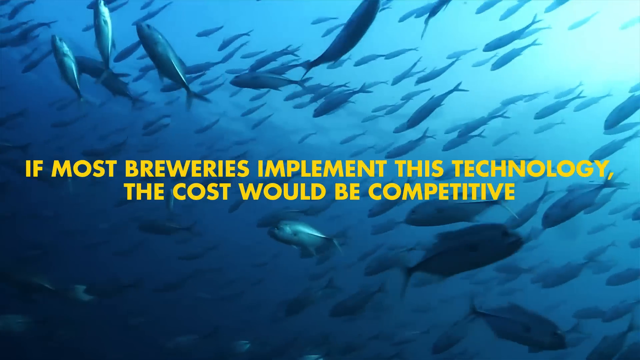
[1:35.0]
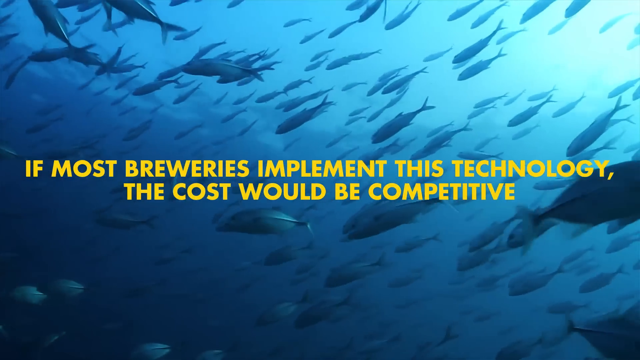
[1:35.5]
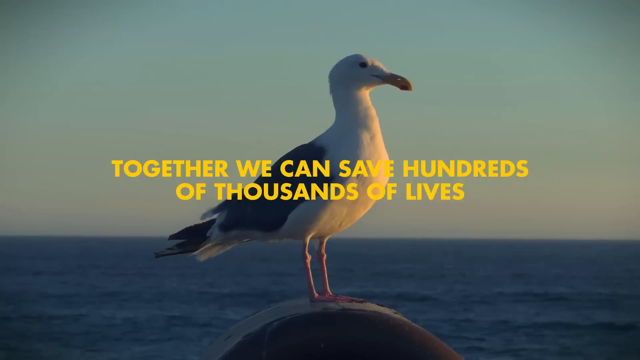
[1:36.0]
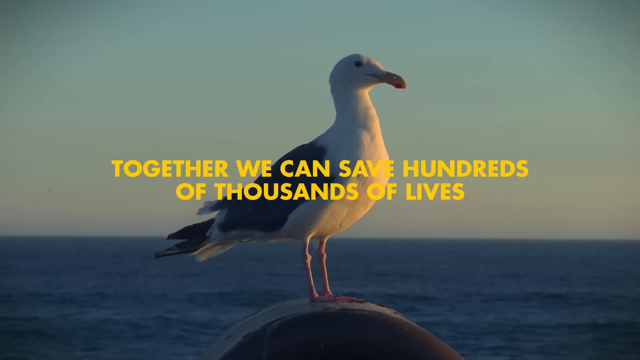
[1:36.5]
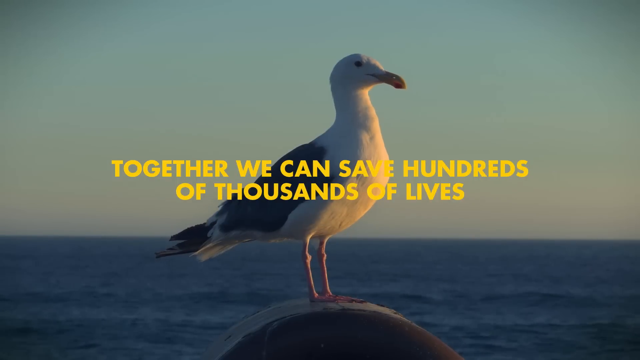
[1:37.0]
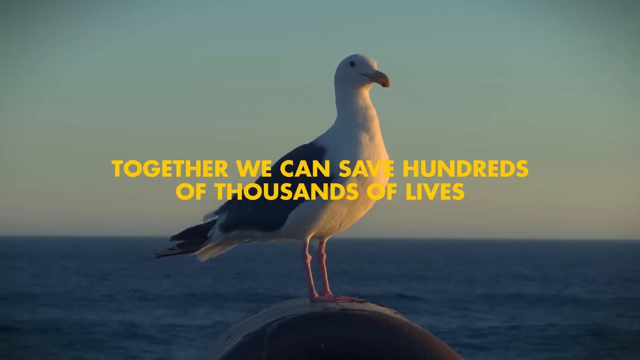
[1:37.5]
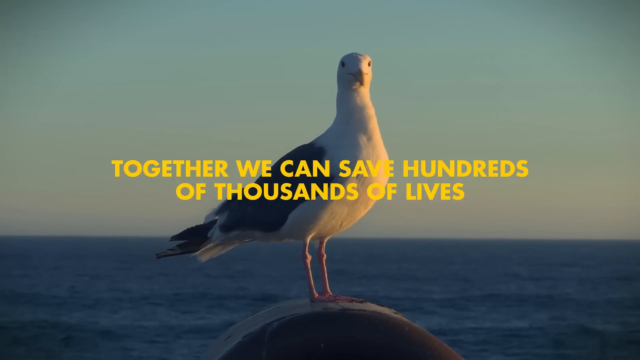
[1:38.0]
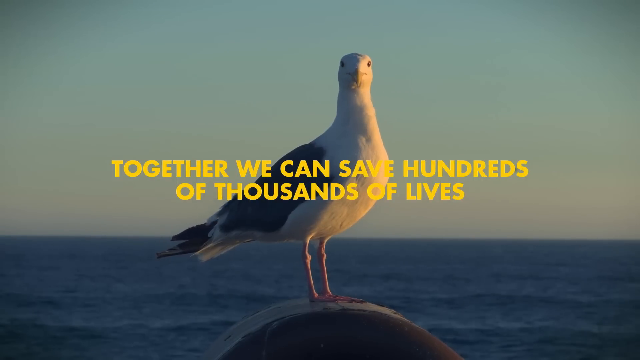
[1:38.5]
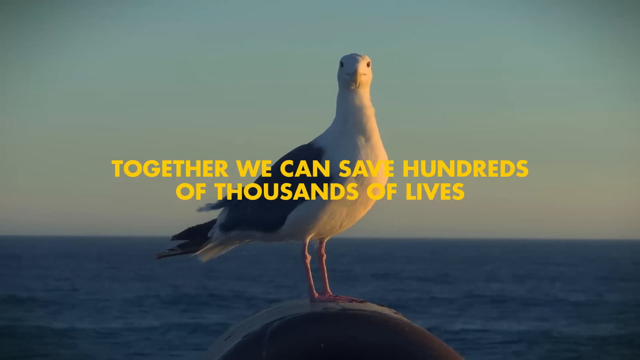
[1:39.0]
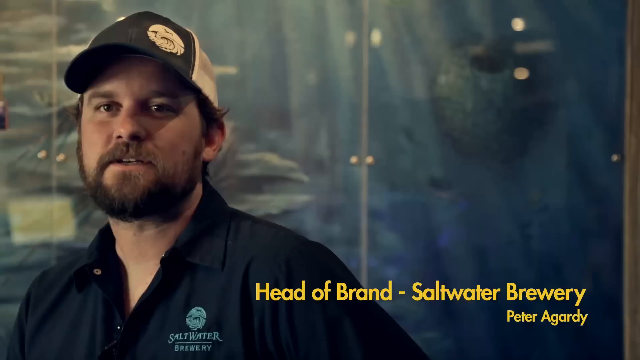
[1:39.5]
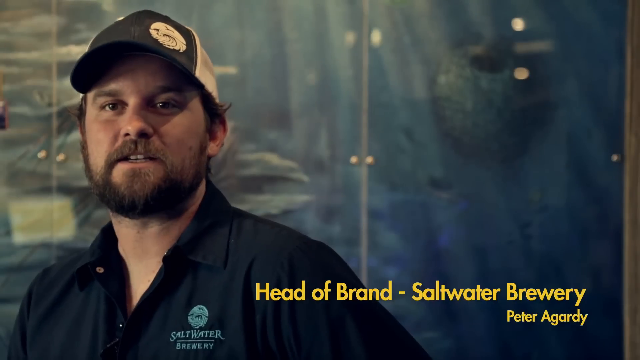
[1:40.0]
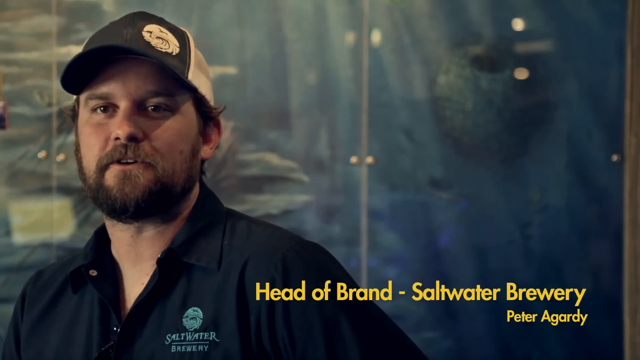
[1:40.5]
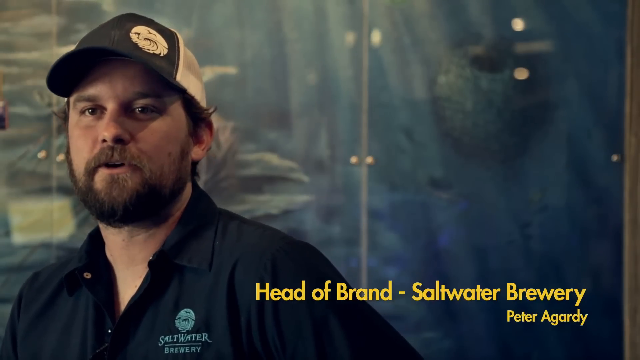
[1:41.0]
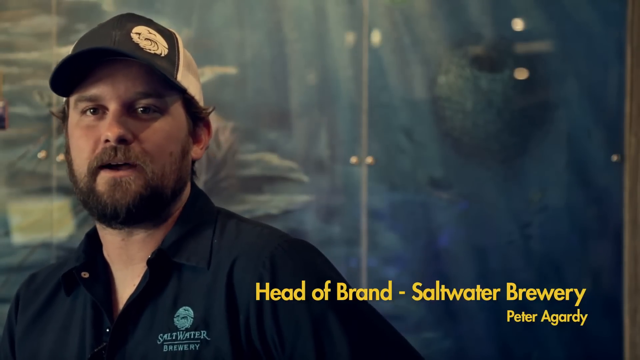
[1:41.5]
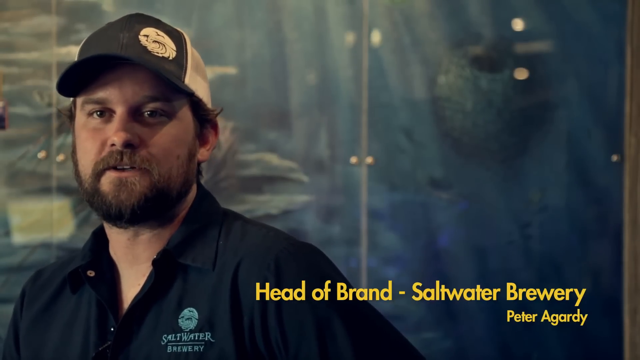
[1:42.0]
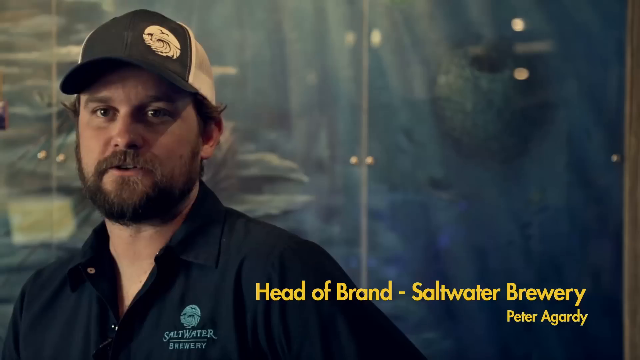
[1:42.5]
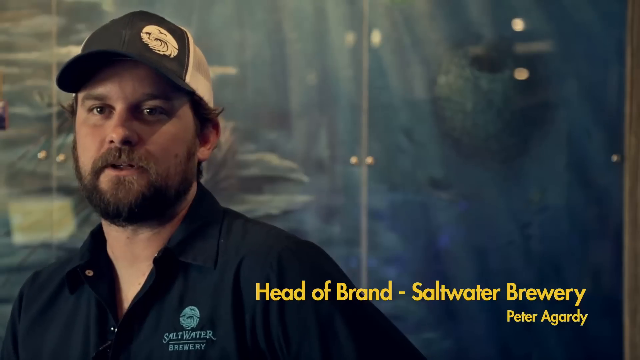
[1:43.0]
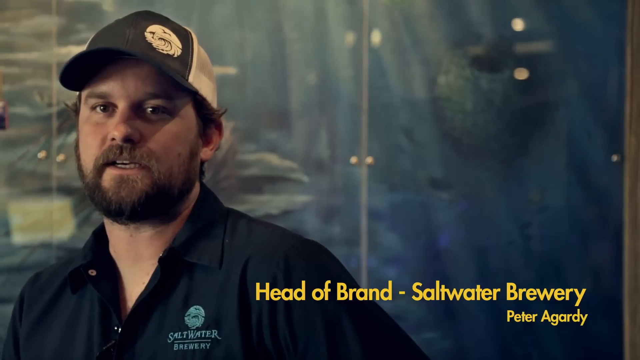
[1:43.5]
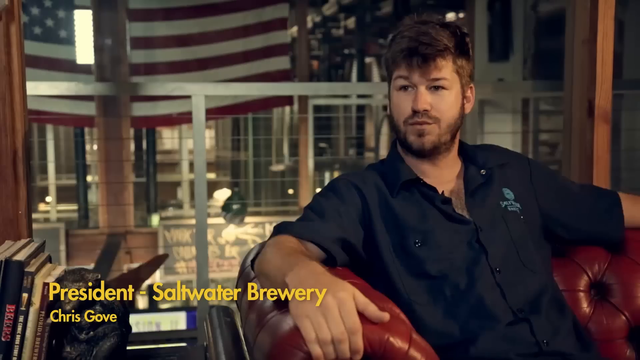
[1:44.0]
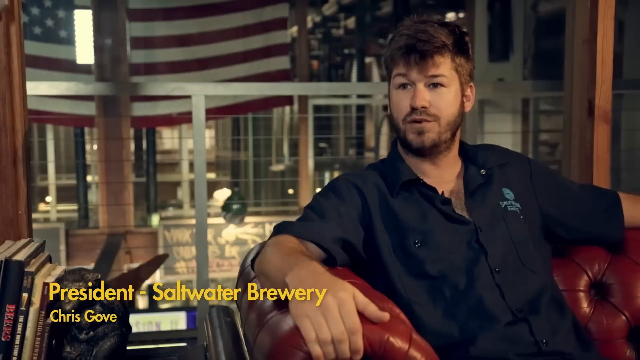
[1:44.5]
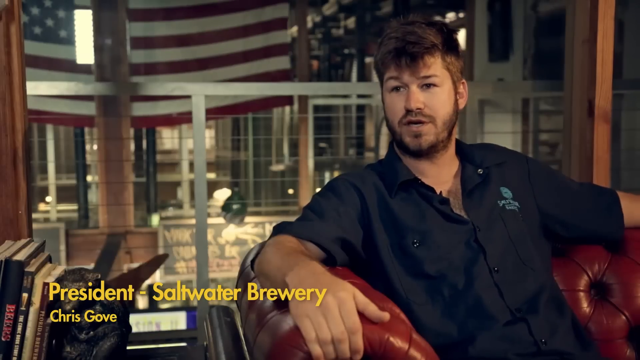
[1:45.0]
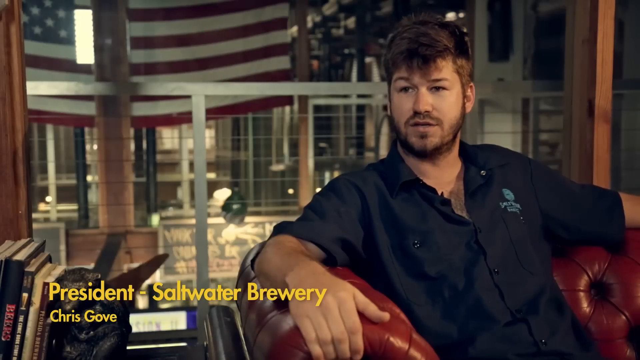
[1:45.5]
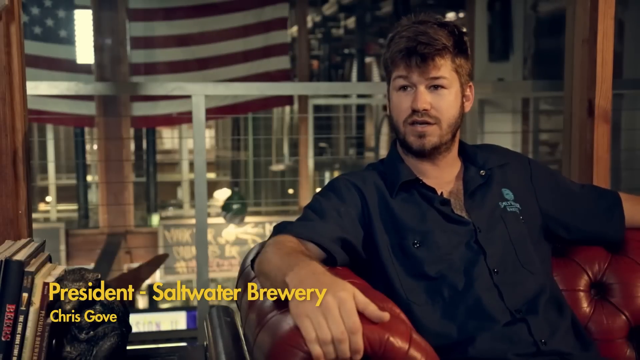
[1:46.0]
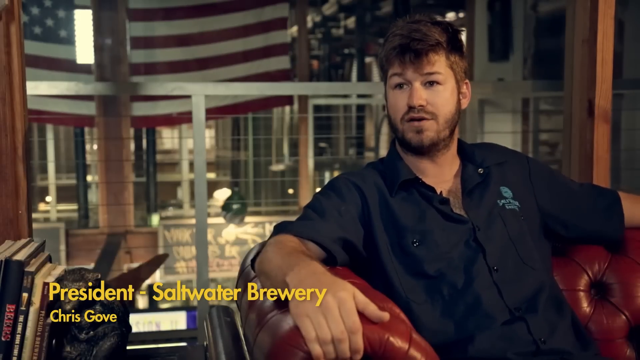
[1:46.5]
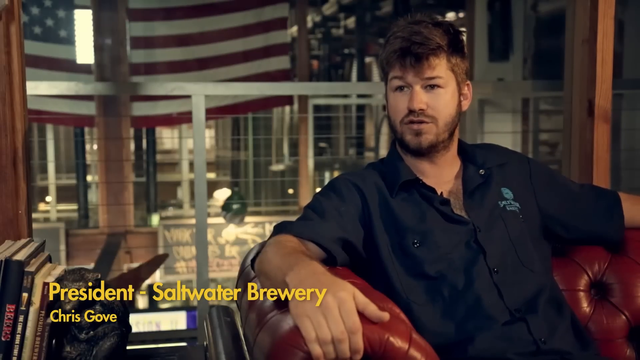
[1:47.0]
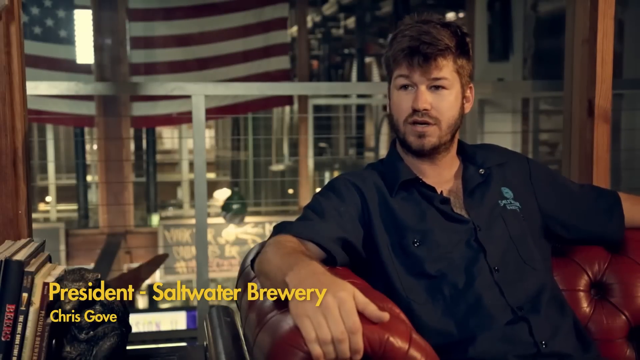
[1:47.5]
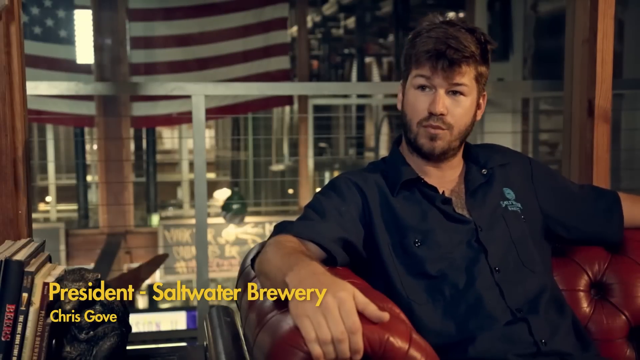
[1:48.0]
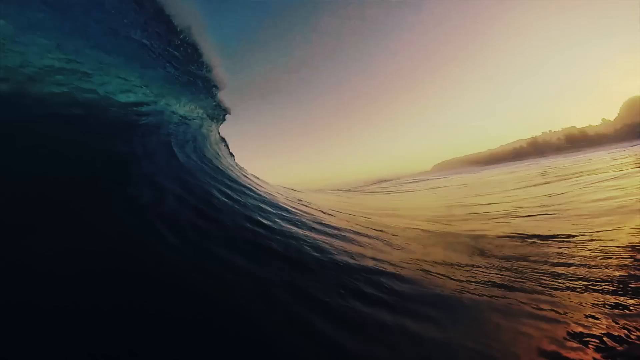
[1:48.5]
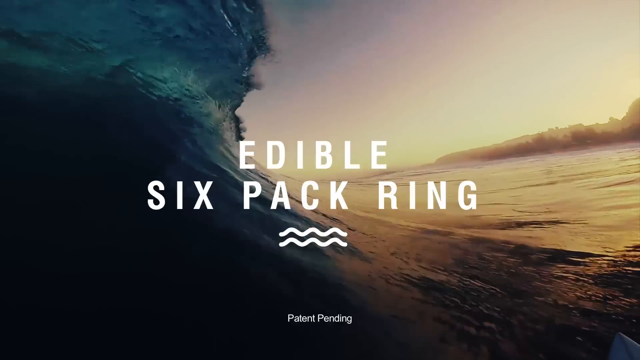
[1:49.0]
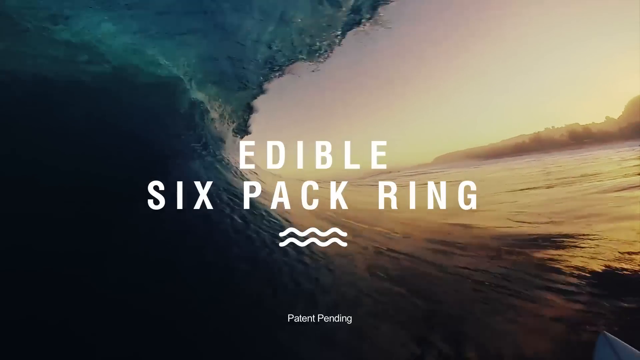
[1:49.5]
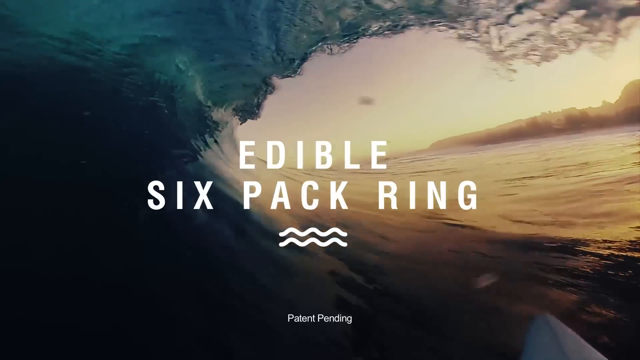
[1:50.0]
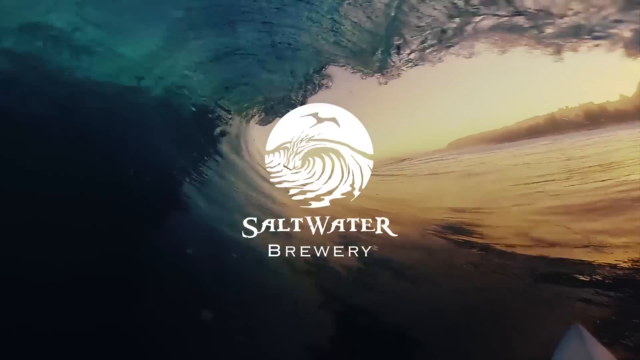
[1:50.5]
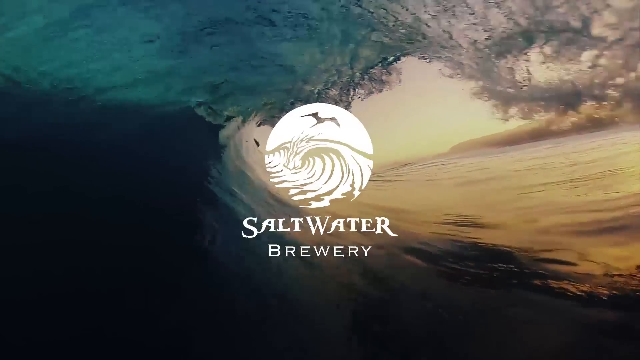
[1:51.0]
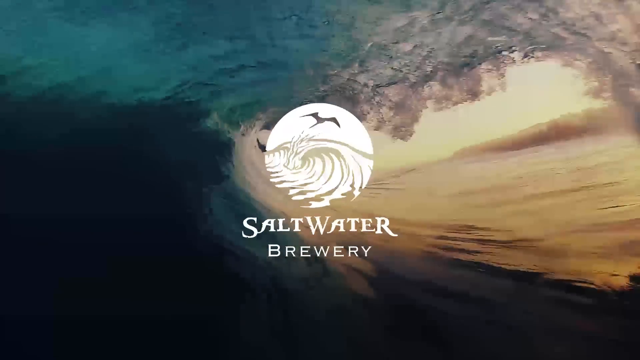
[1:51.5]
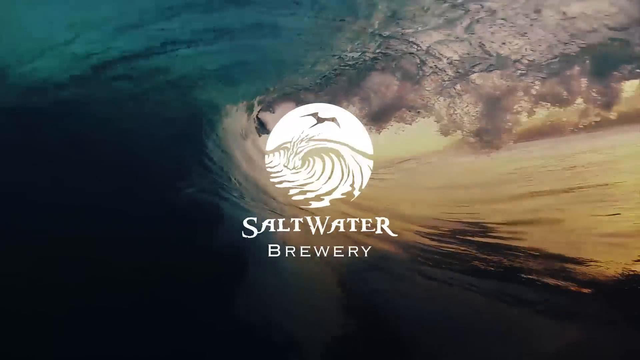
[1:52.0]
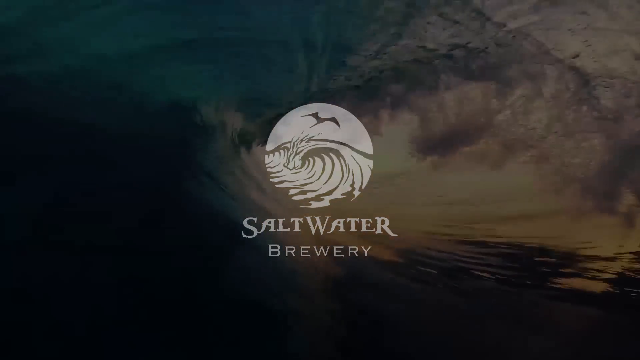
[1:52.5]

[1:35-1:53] More animals appear, including a seagull and the dolphins. Two men are then shown talking: one is the president of Saltwater Brewery and the other is the head of brand, and the video moves between their two settings. They seem to be in the brewery. The video ends on the logo.